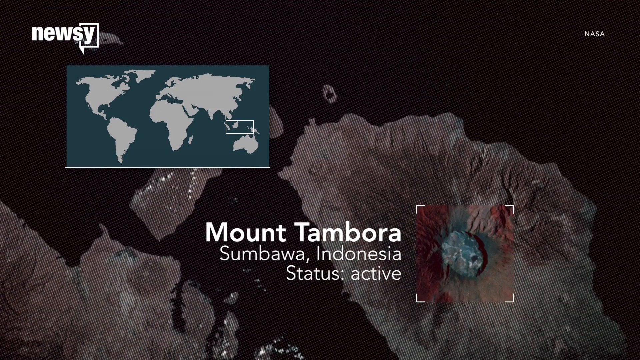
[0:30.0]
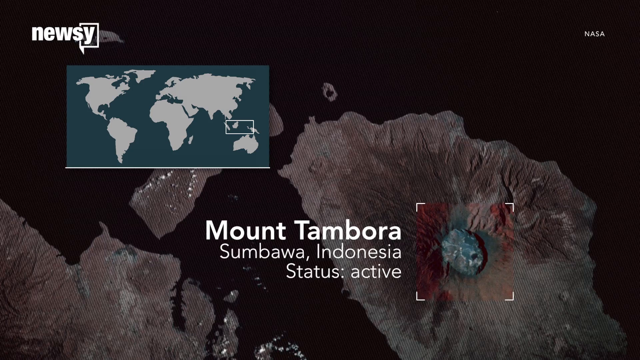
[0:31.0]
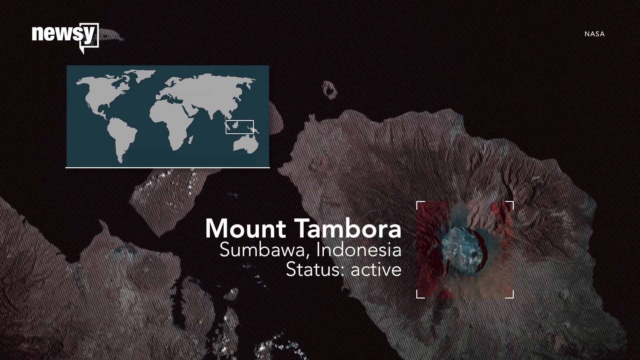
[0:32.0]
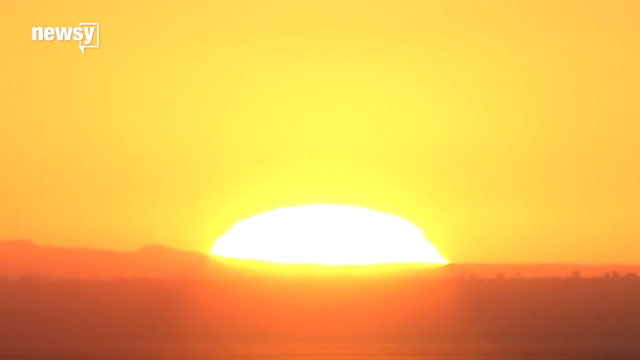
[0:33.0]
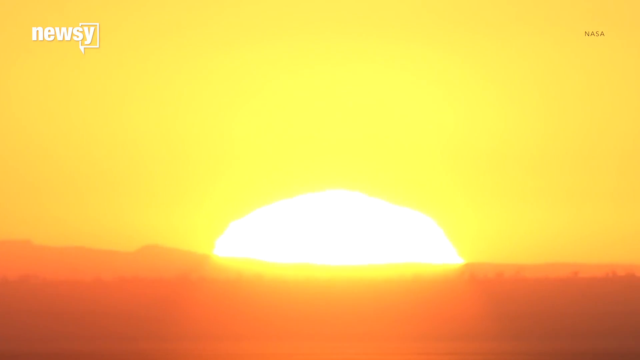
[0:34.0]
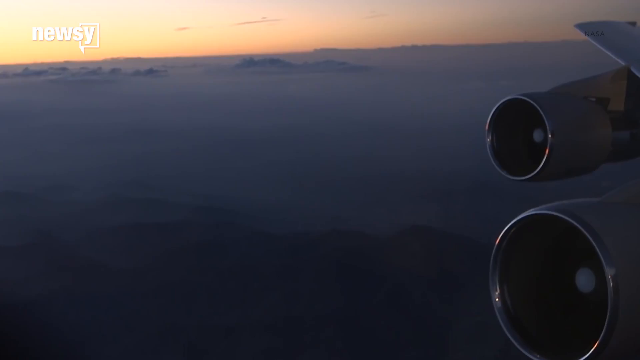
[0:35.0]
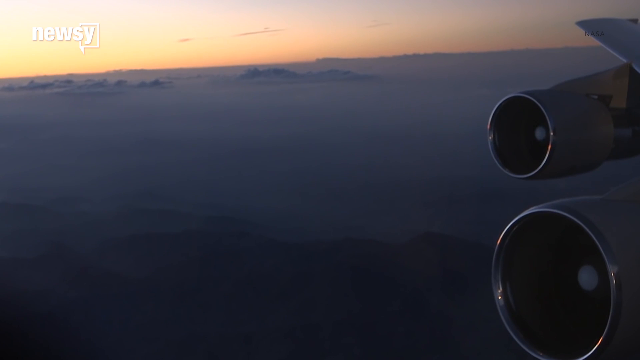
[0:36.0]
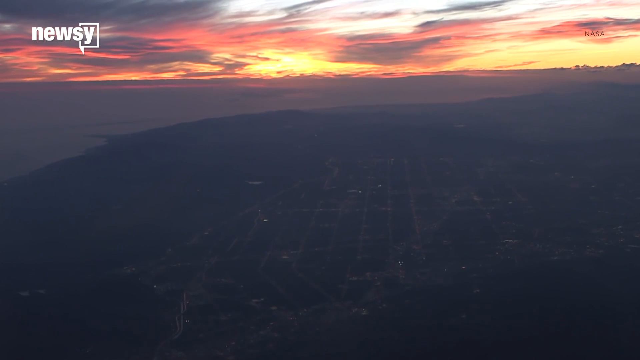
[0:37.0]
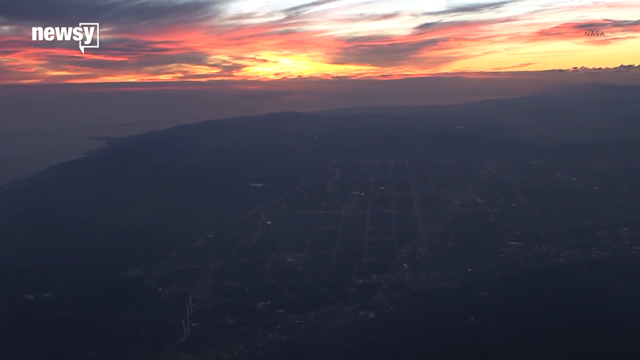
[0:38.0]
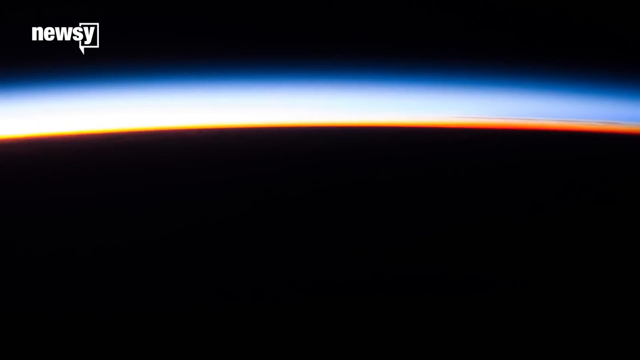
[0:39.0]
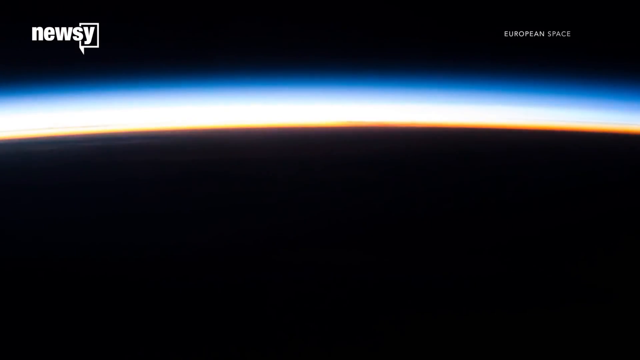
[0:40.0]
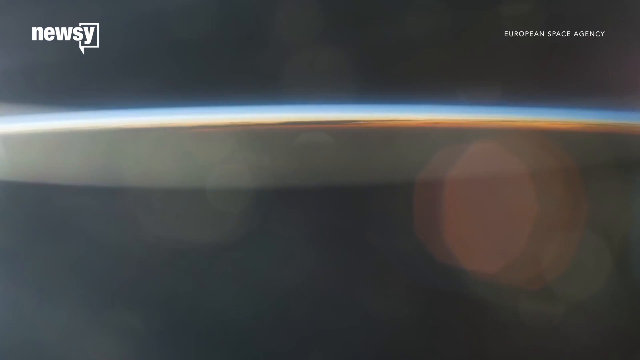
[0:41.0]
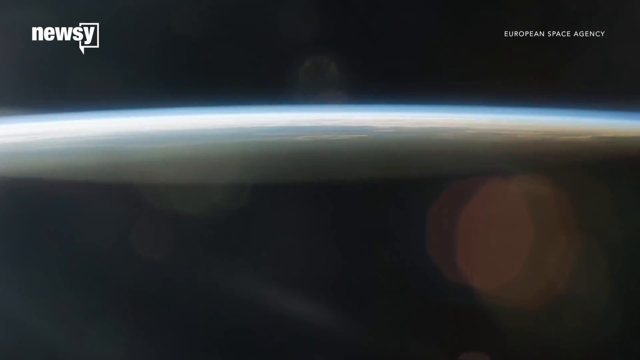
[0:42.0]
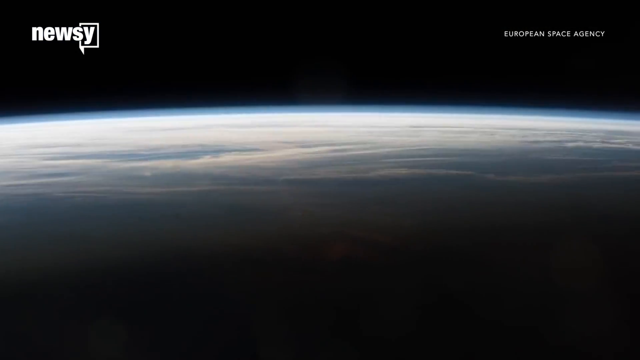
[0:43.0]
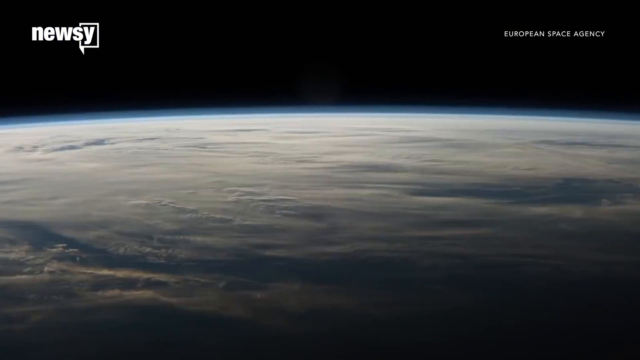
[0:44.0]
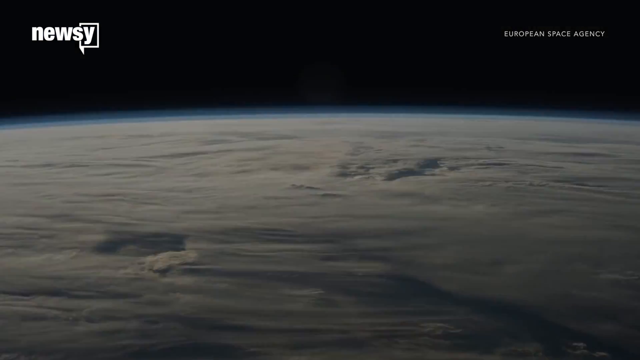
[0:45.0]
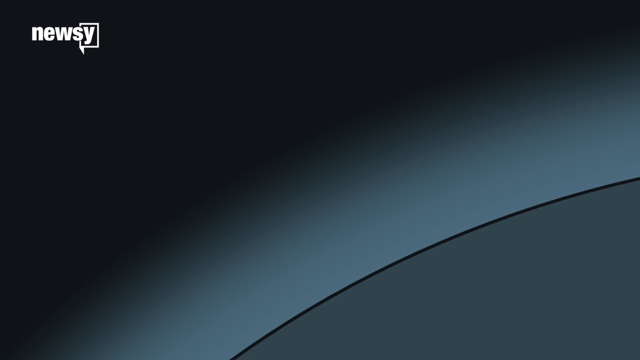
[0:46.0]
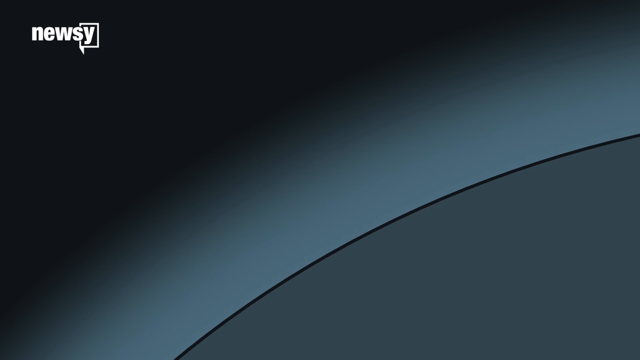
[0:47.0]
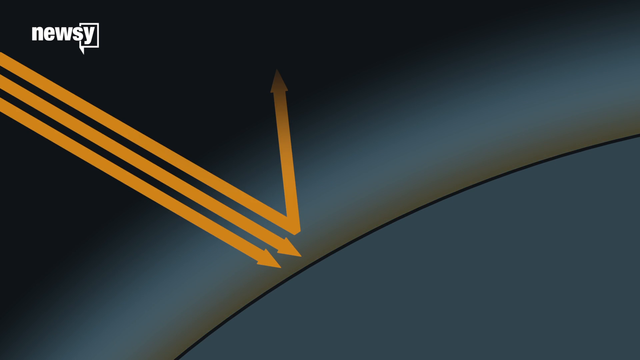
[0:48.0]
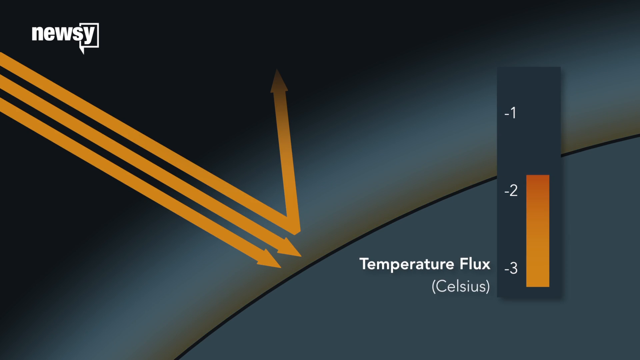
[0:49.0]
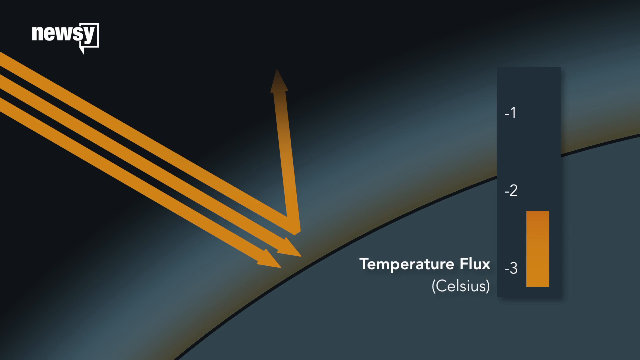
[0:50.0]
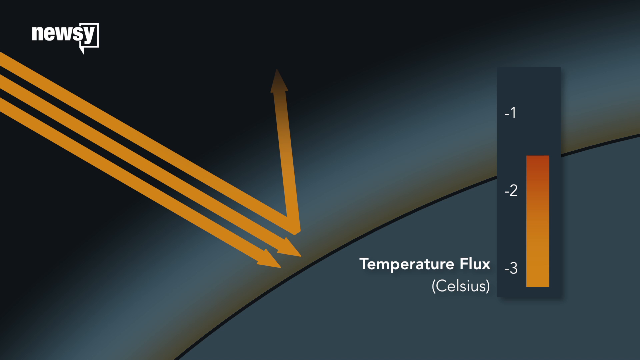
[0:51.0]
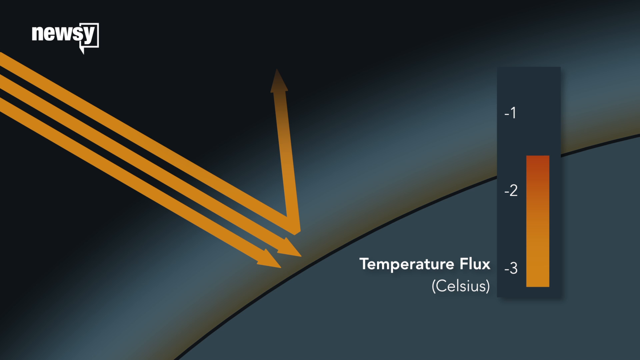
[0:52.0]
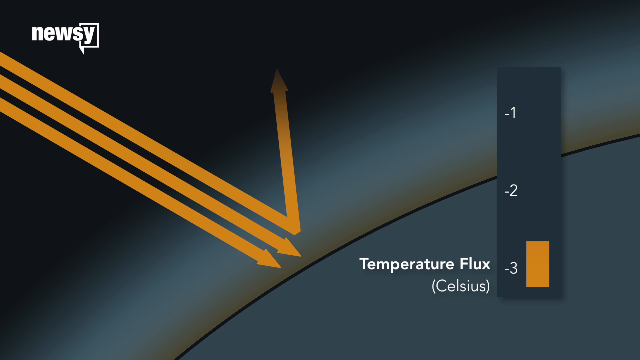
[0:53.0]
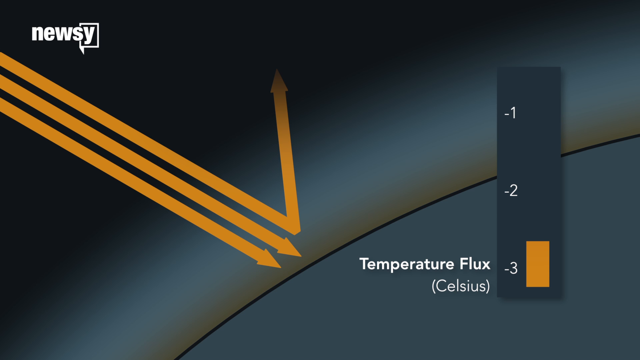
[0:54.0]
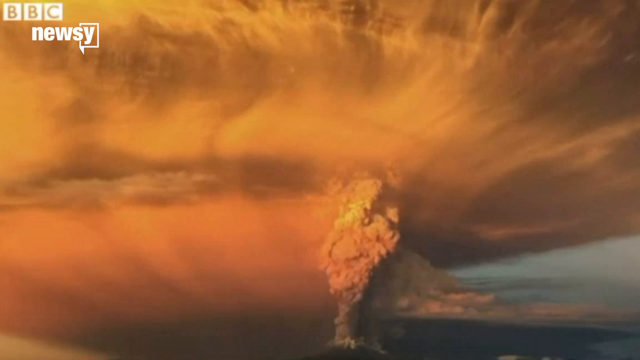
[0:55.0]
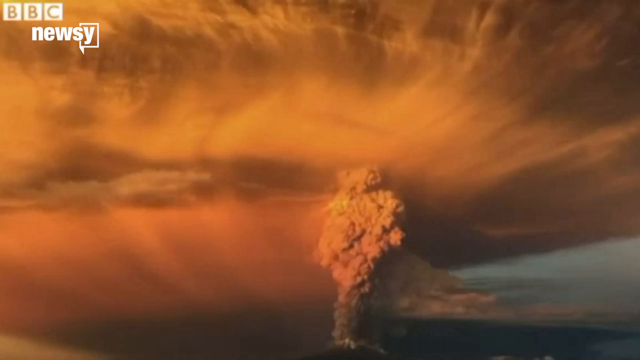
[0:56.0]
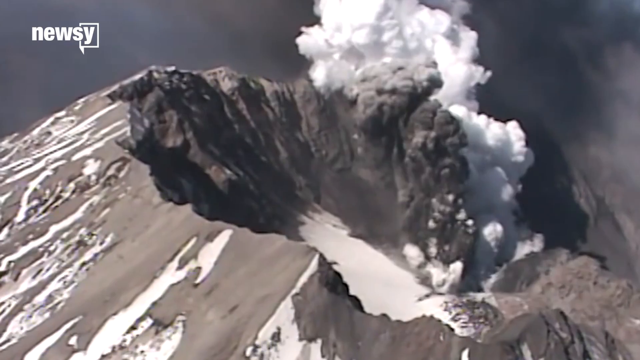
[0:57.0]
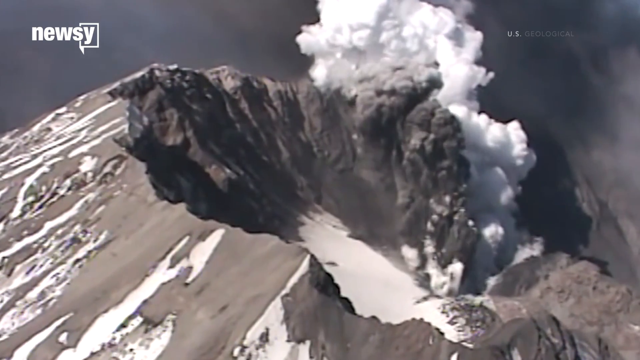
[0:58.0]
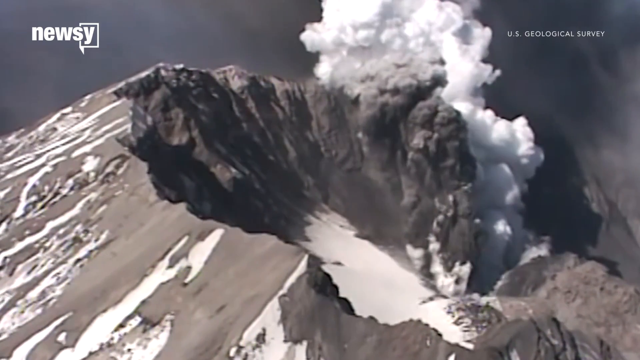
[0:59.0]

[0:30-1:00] The terrain shown on the right-hand side is of an active volcano, and on the map shown as part of the screen, the location of the active volcano is highlighted with a white box. Footage of the sun rising follows, with different shades of orange and the sun almost white as it rises. Next comes footage from the perspective of a plane, with the plane's engines in the picture and the sky in the background, before an overhead shot of the sun with some buildings underneath. Footage from the European Space Agency, taken from space, shows the surface of the Earth from different perspectives. A visual then appears on the screen: a semicircle in the bottom right with orange arrows pointing towards it, one of which bounces back up to the top. A temperature gauge on the right-hand side reads "temperature flux Celsius", and an orange bar goes from minus 2 to minus 1 and then back down to minus 3. Footage of a volcano erupting follows; one shot is orange and the next is white and grey.